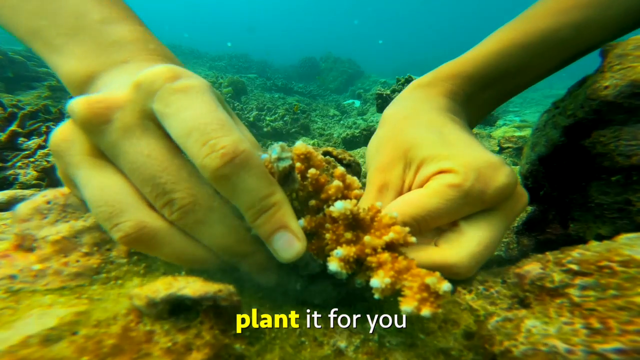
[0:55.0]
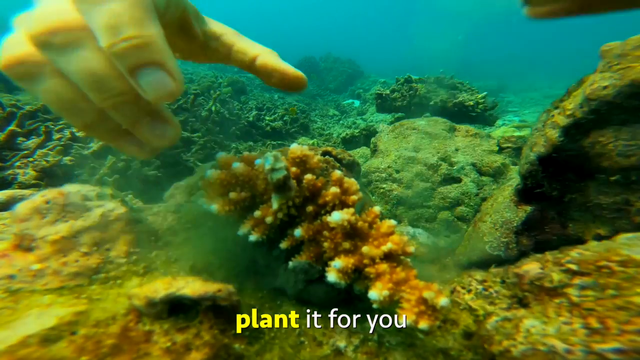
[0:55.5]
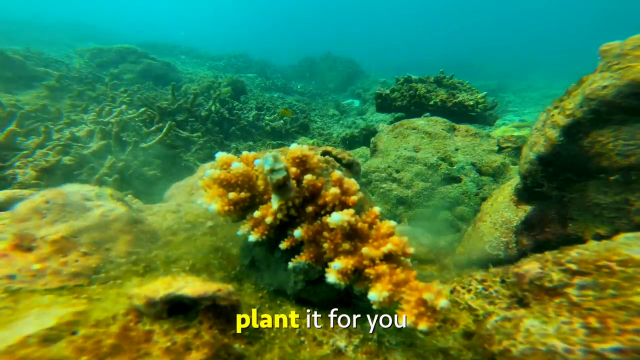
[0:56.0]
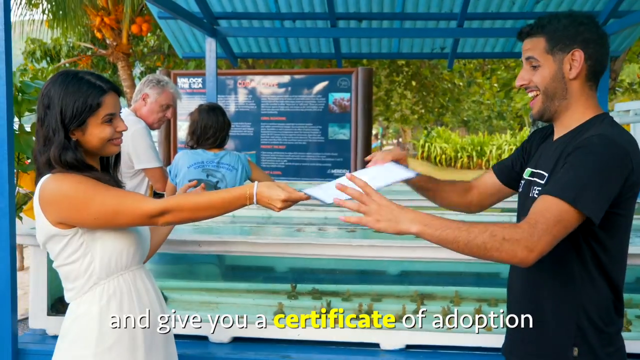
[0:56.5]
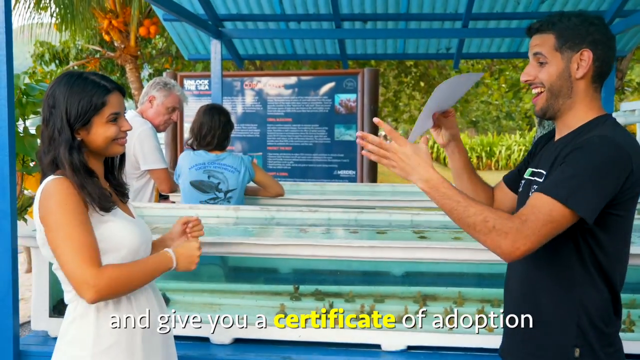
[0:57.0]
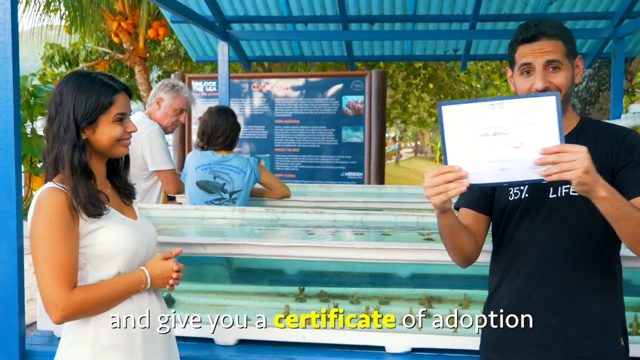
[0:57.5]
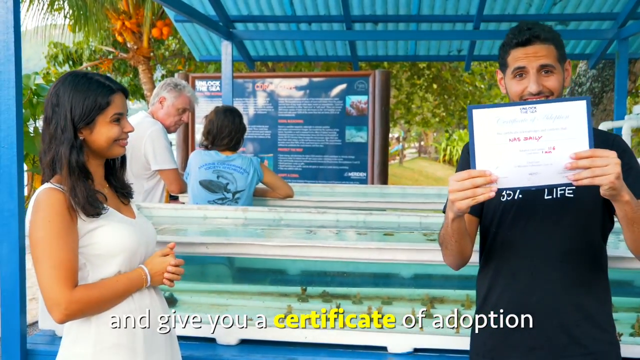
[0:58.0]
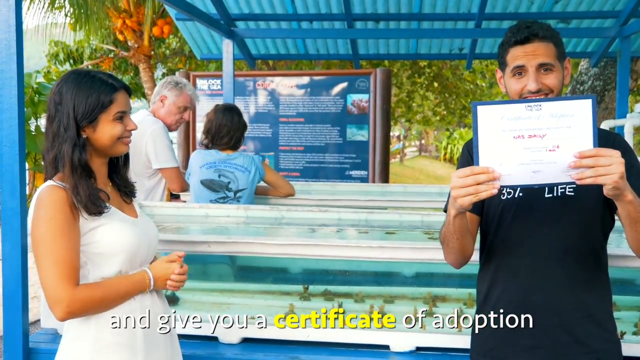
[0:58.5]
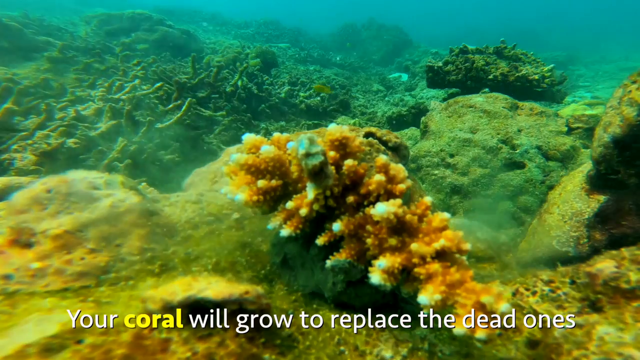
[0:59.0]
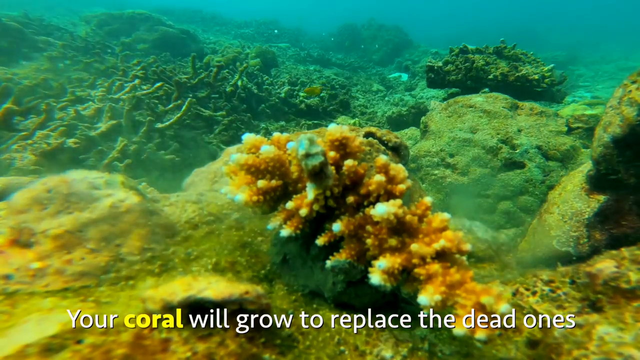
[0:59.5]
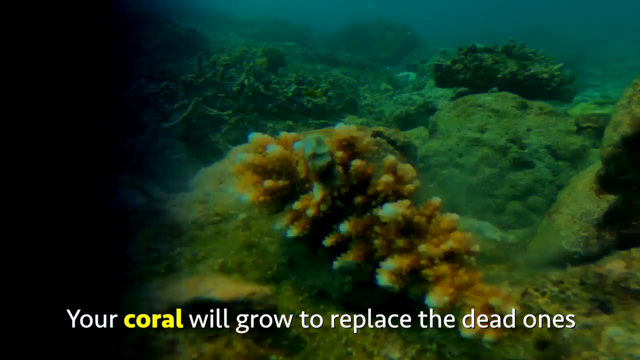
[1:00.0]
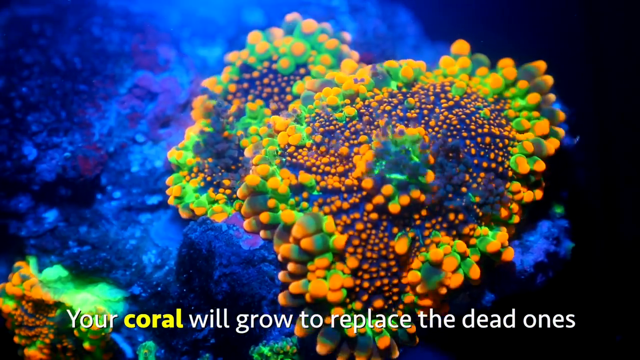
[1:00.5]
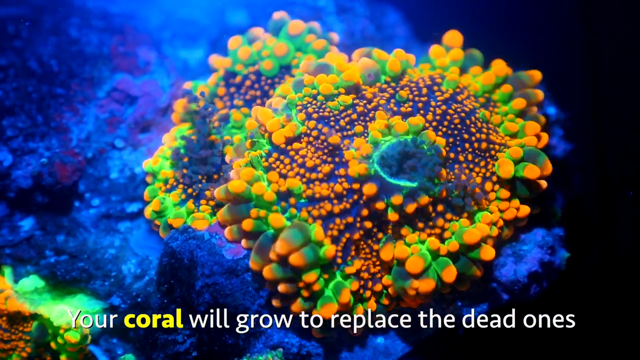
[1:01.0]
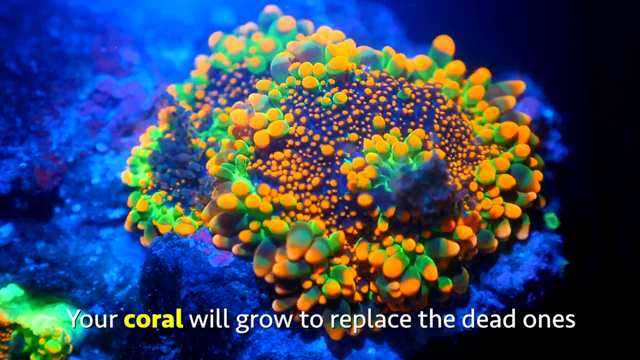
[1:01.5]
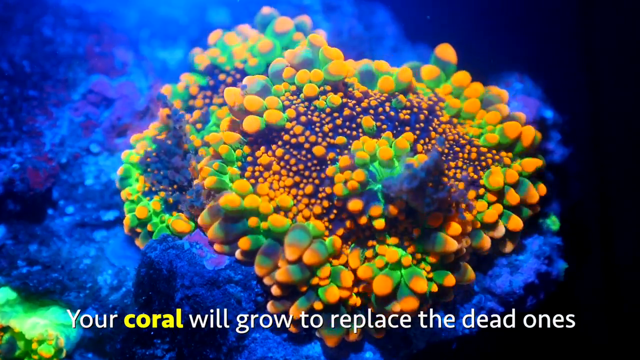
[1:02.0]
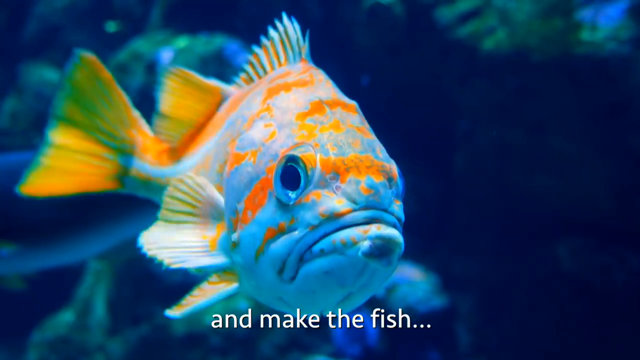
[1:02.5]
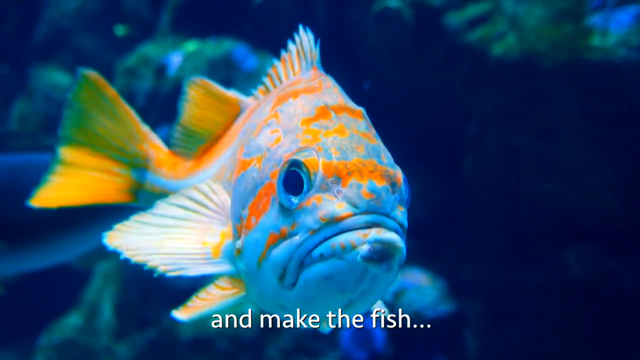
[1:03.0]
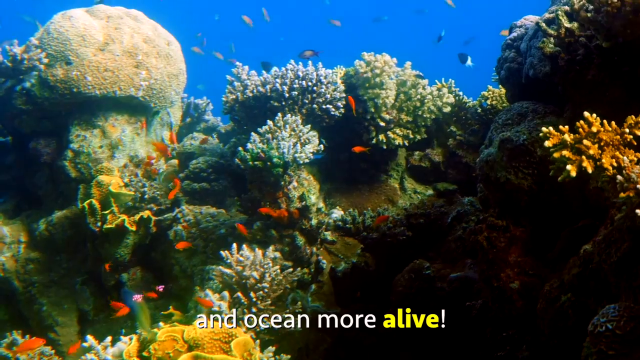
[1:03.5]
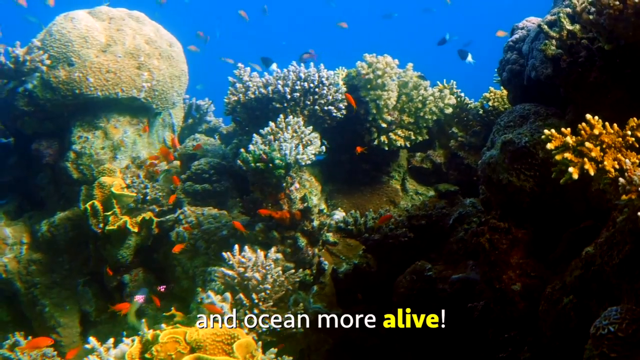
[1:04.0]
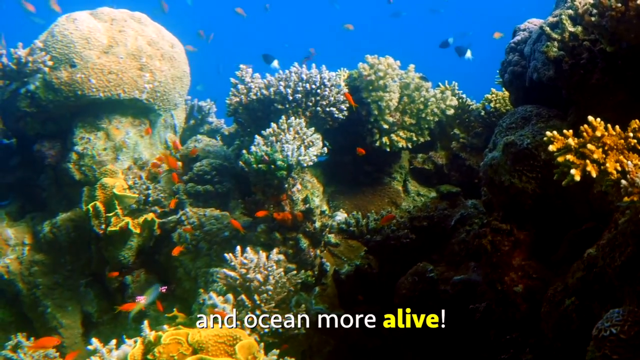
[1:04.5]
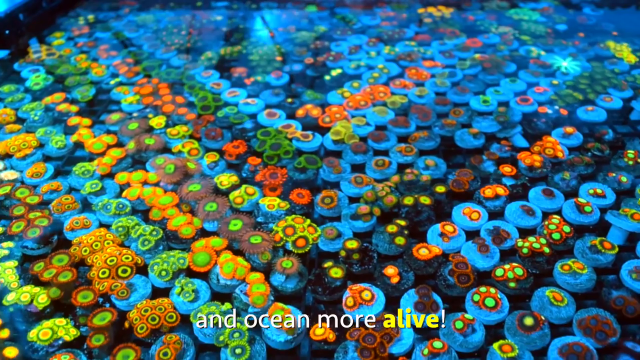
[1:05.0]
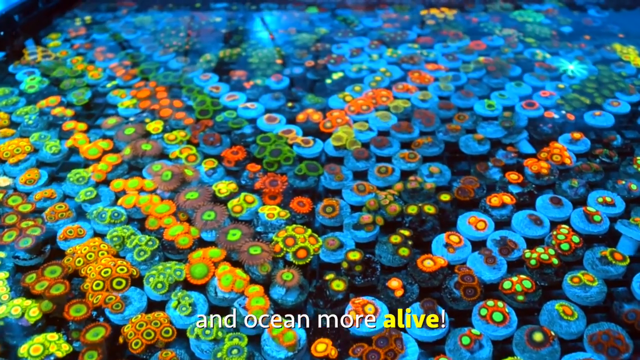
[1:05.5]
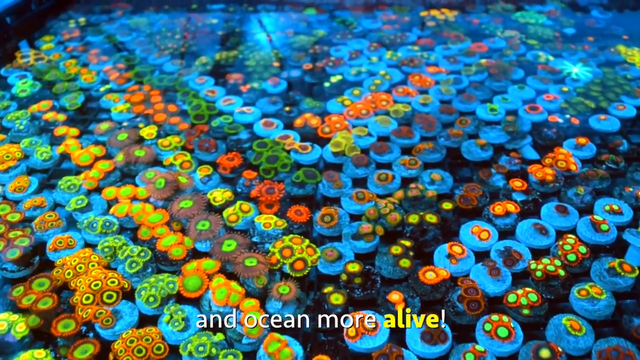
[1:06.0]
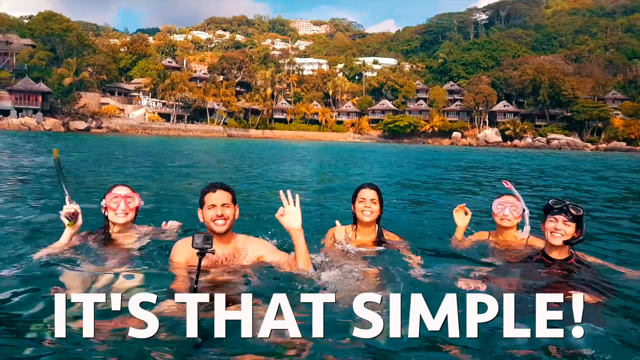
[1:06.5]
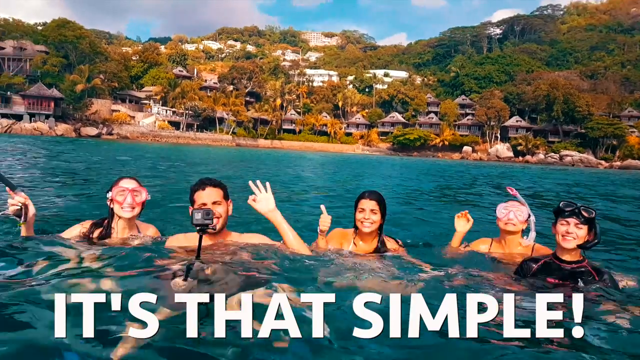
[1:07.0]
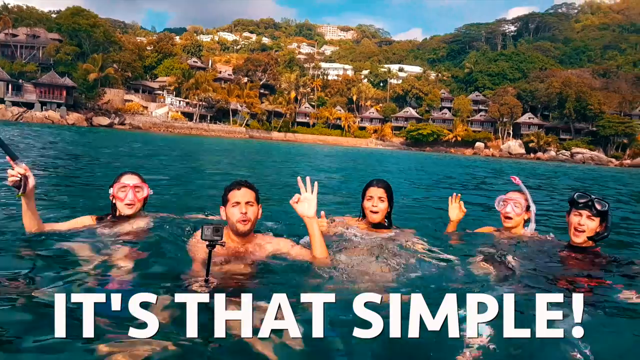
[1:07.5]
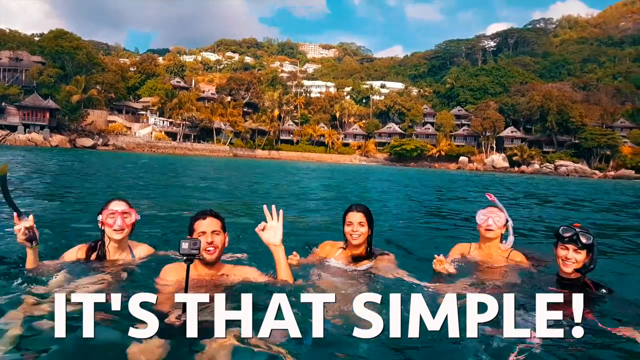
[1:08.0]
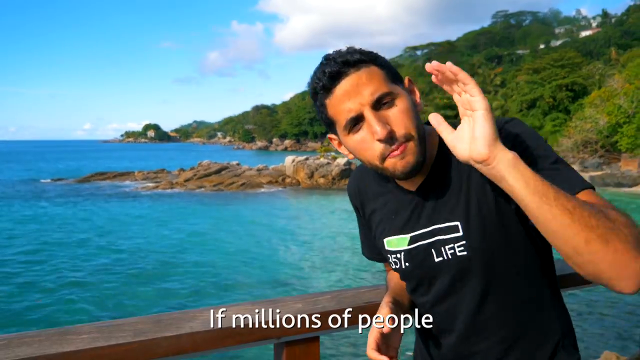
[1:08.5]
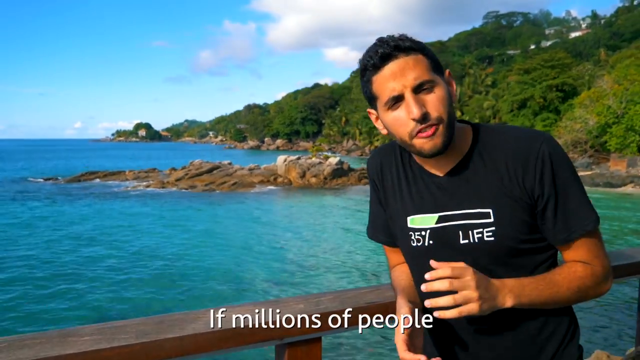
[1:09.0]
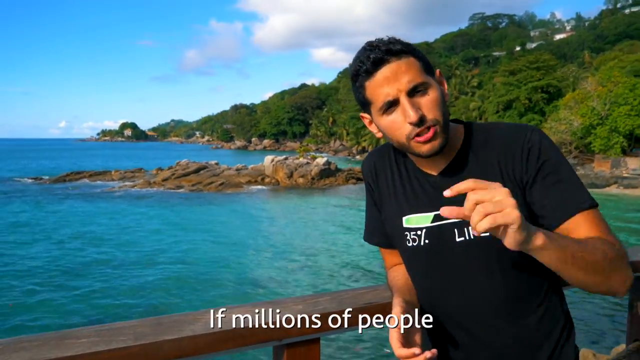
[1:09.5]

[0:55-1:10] A quick barrage of shots shows live corals, some fish and underwater footage. The text reads: "so what they do is they plant it for you and they give you a certificate of adoption. Your coral will grow to replace the dead ones and make the fish and oceans more alive. It's that simple." Further text begins "if millions of people do their small part". Someone hands over and someone receives the adoption papers. More shots show healthy coral and healthy fish, including rows of coral underwater that look almost like cupcakes, quite colorful and arranged very symmetrically. Some people with selfie sticks and masks swim and float on the water, having either been looking or maybe finished planting the coral.